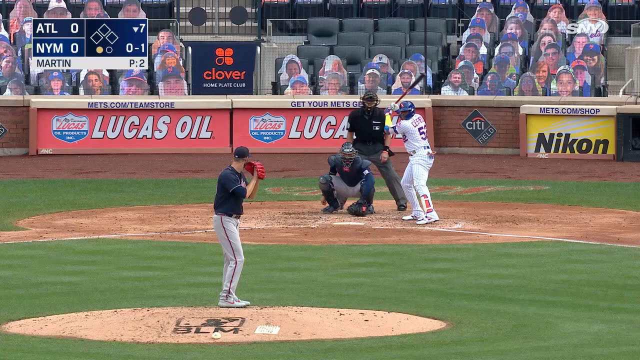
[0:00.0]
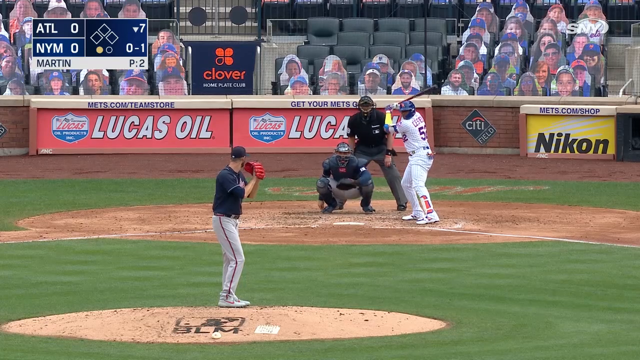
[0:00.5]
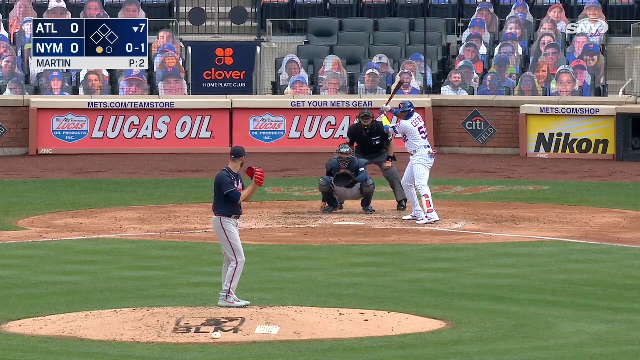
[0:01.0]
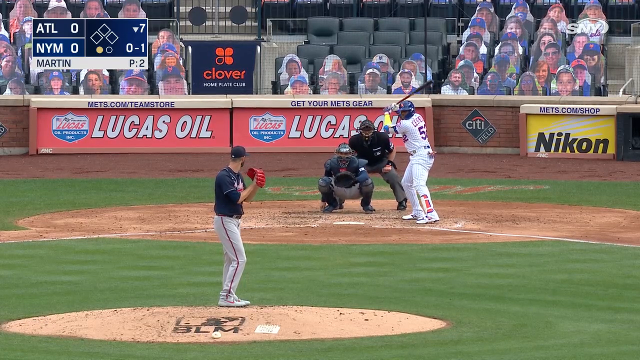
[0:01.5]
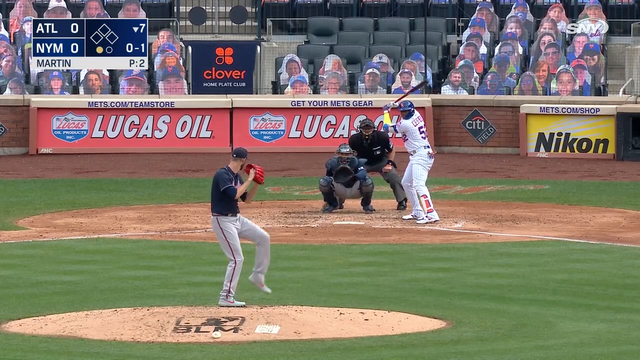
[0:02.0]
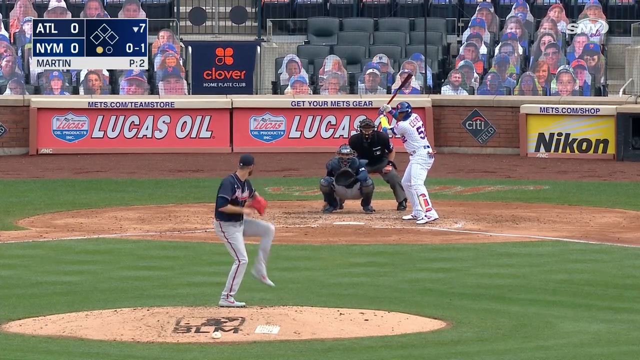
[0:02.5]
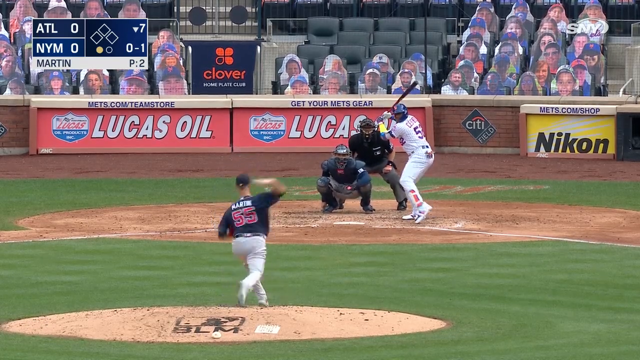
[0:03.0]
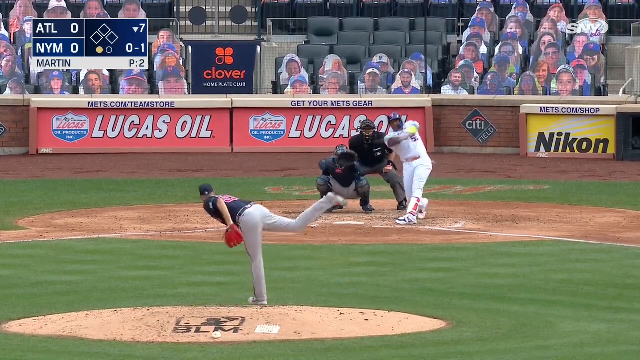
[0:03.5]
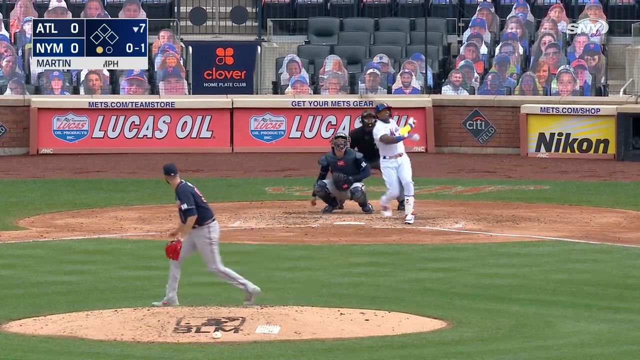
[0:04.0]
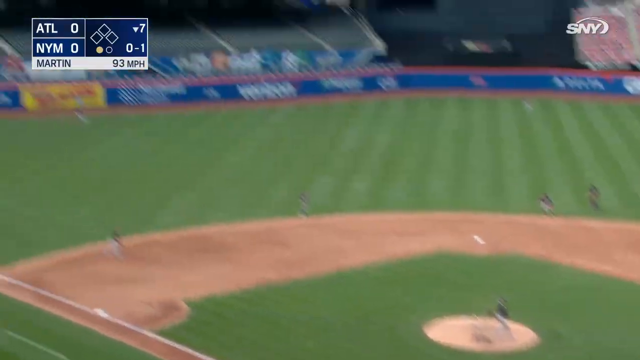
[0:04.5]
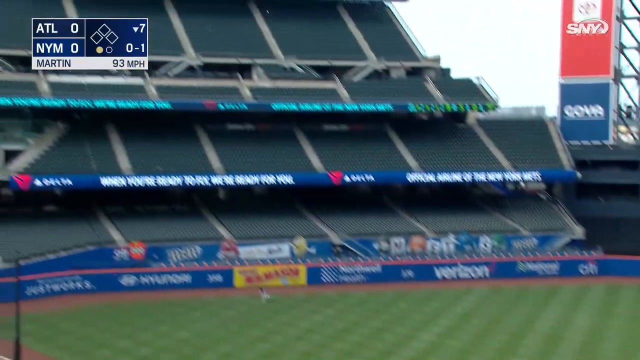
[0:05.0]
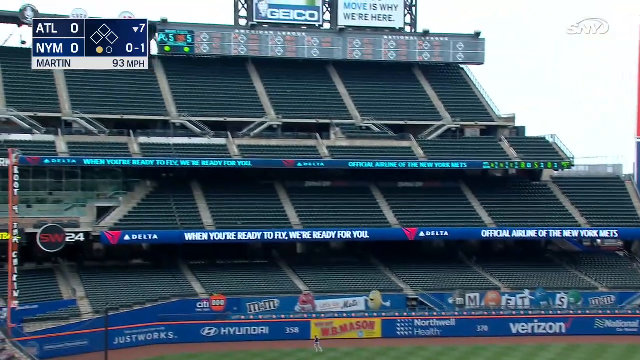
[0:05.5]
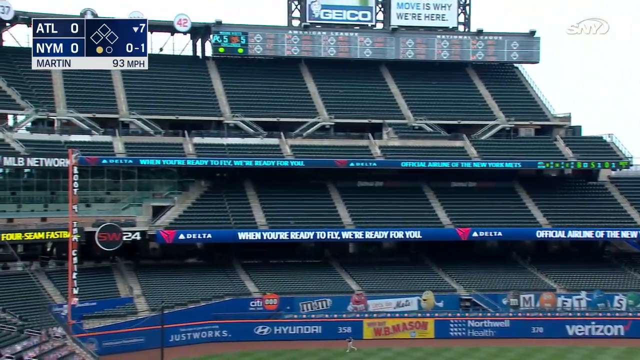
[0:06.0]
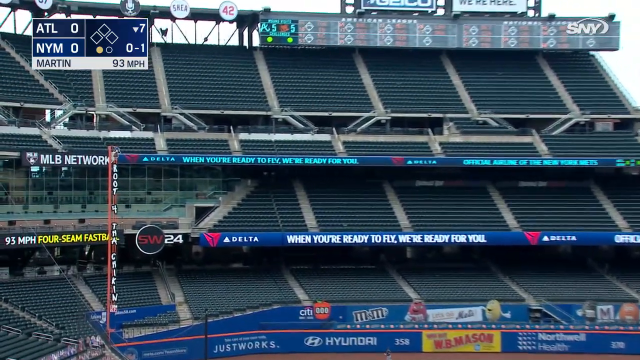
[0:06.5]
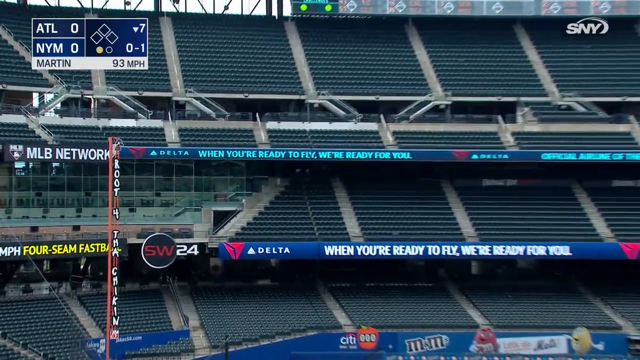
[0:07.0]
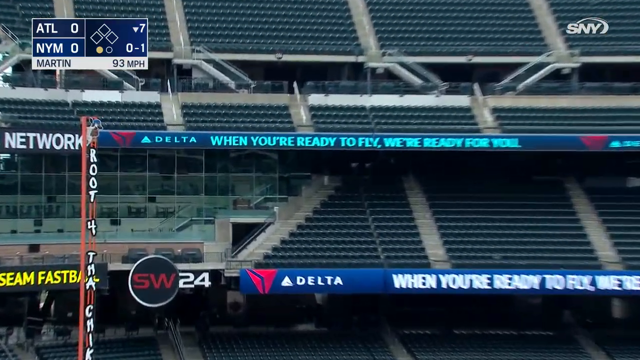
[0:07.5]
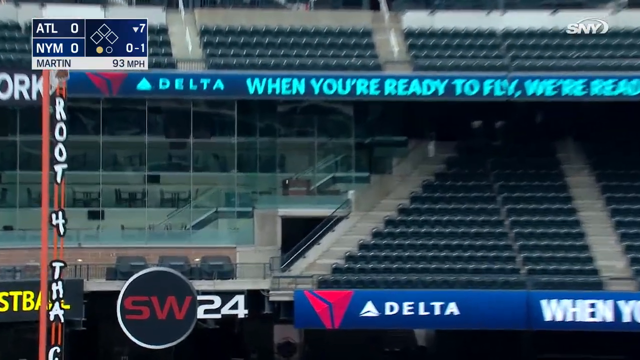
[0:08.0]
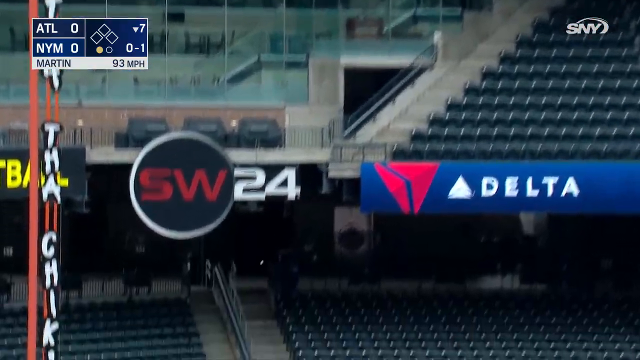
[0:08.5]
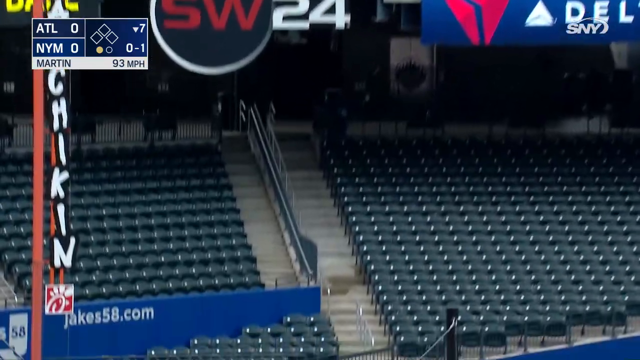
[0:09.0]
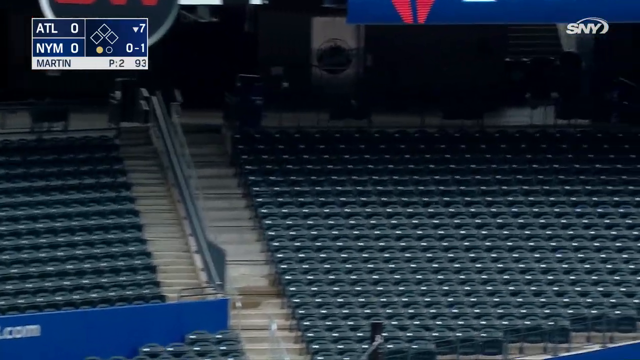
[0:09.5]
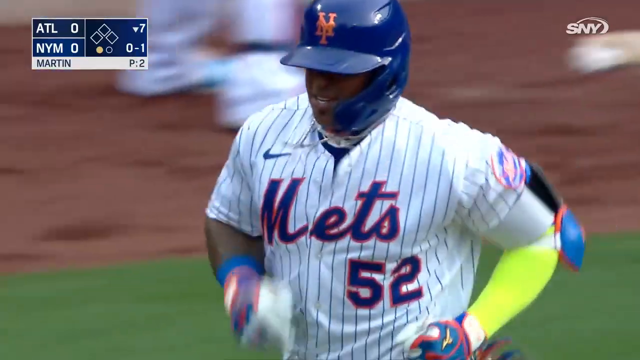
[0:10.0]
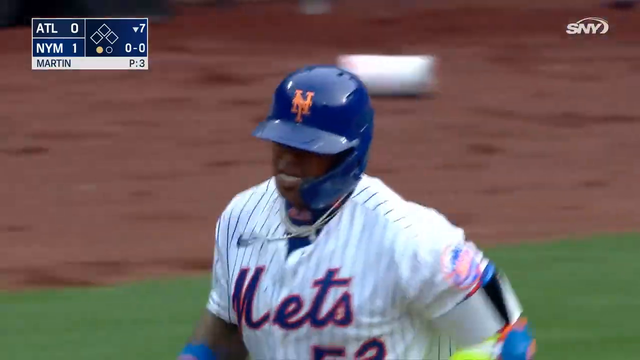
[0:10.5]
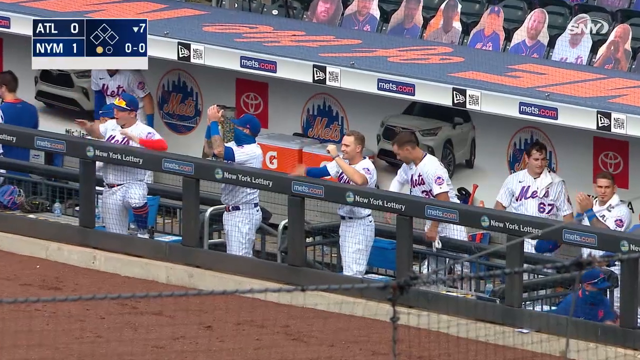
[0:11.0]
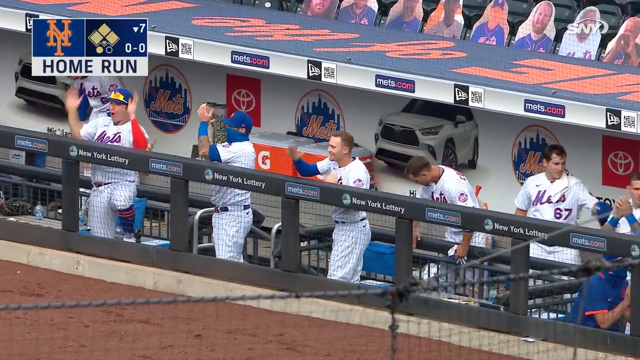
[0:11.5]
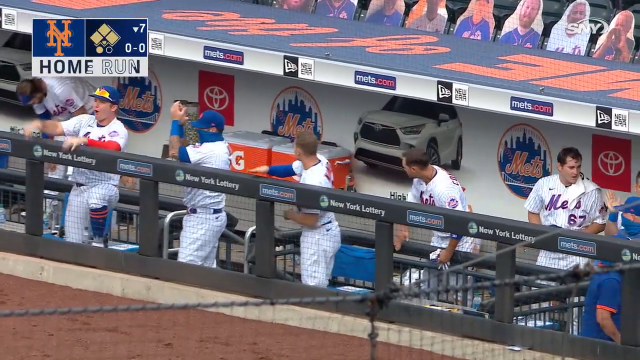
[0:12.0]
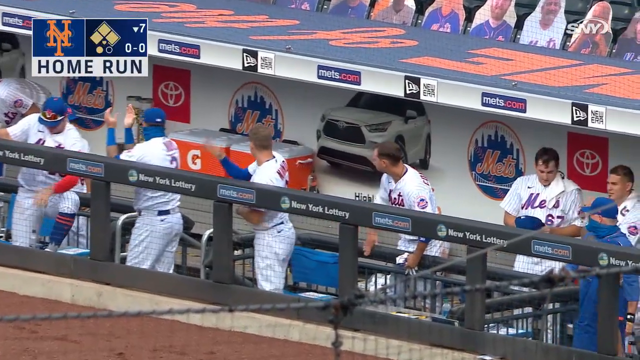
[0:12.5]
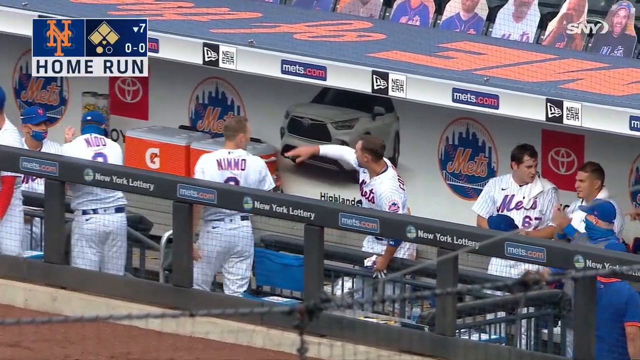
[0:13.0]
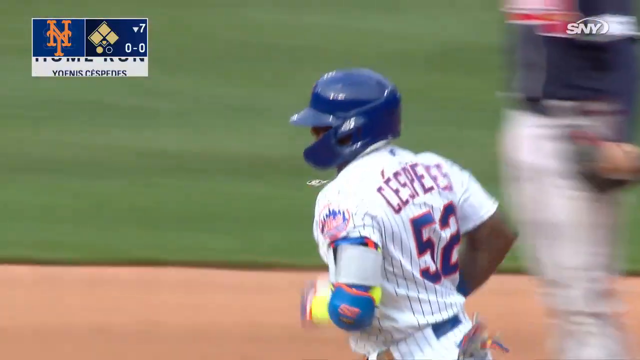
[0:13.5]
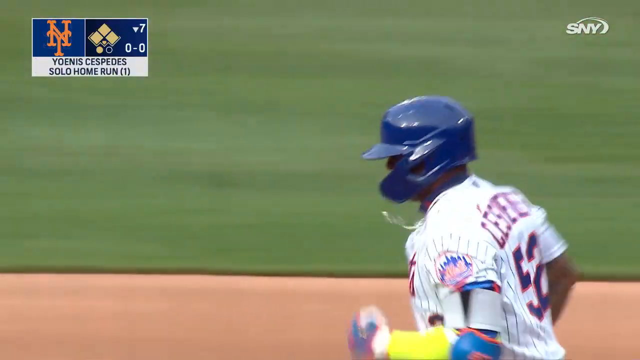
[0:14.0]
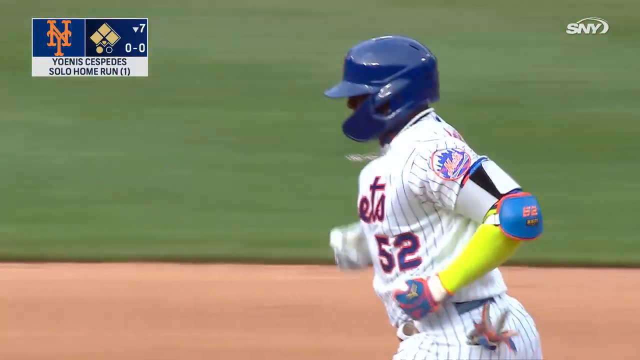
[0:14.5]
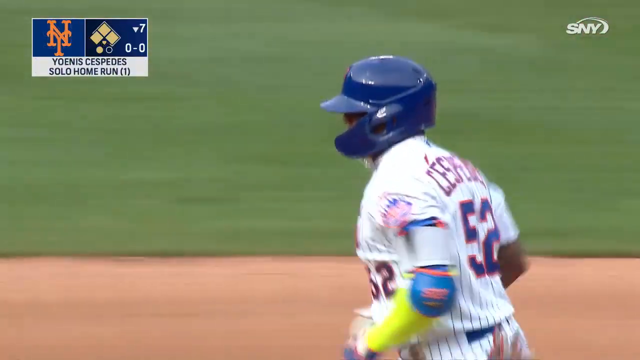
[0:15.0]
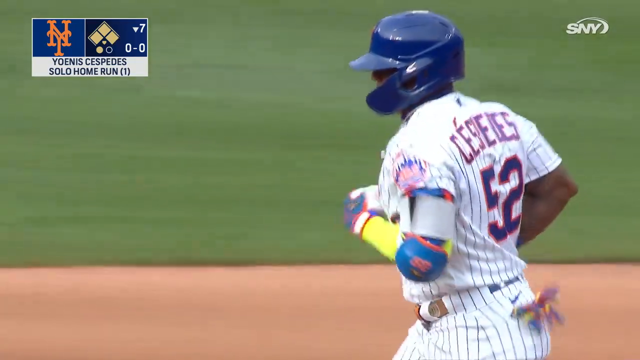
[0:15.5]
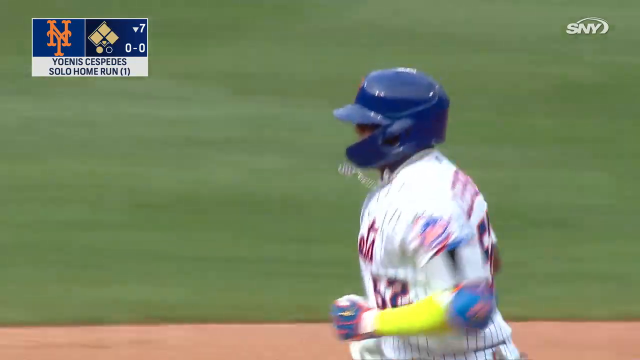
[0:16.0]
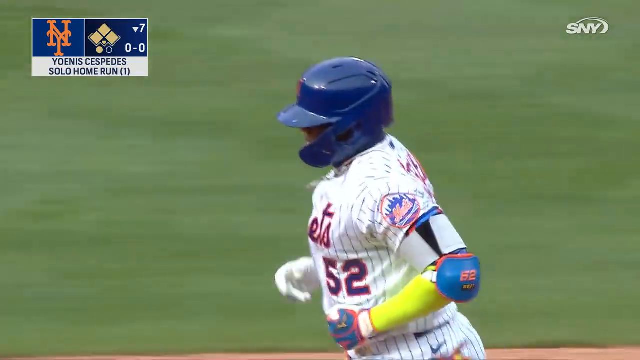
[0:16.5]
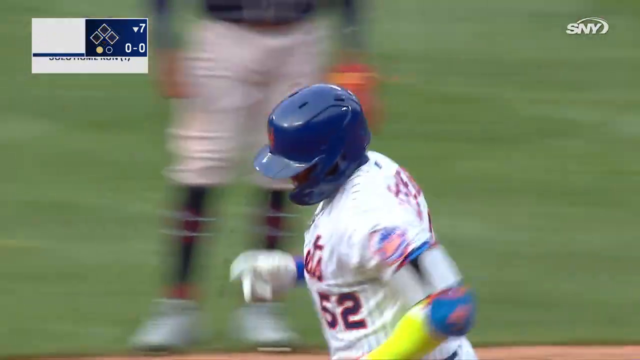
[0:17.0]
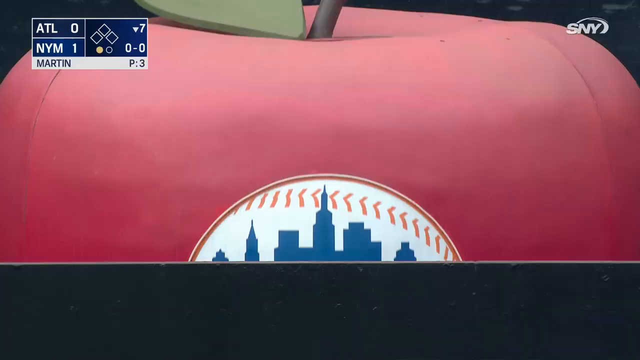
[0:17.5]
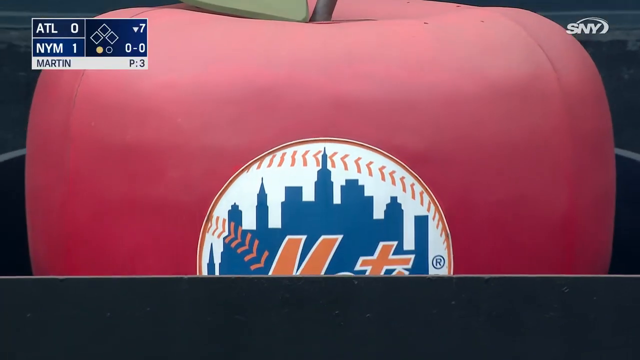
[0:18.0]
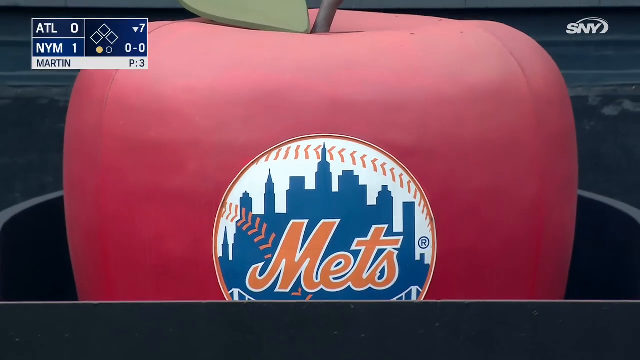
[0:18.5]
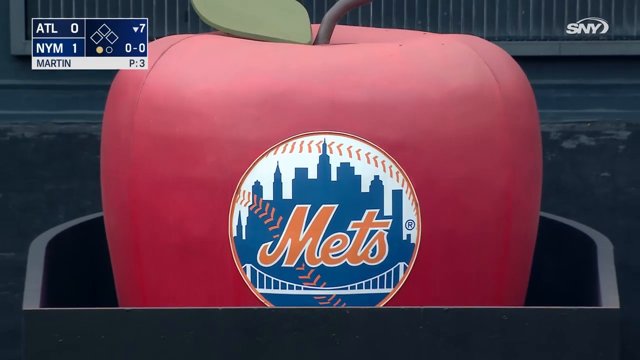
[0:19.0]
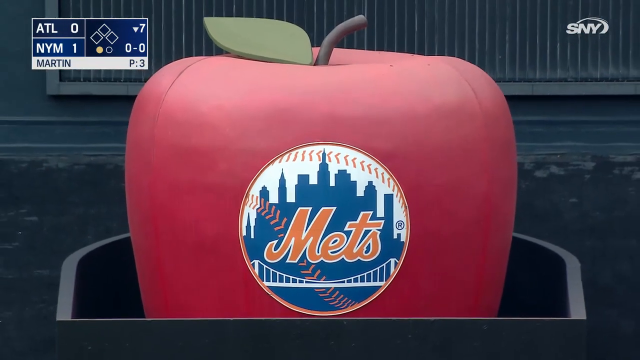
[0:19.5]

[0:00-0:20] A Major League Baseball game between the Atlanta Braves and the New York Mets is underway, with the Mets at home. A right-handed Braves pitcher is on the mound, wearing a dark uniform top and light gray pants with a red stripe down the middle, pitching to a right-handed Mets batter who looks like Cespedes. The batter is in the box waiting for the pitch, with a shin guard on his left leg. In the background is a brick wall at Citi Field, with advertisements for Nikon and Lucas Oil. In the rows of stands visible behind home plate, many seats are empty and others are filled with cutouts of people; apparently about 50 seats hold cutouts of people's faces, meaning the game took place during the COVID season. The right-hander, Martin, number 55, throws a fastball, and Cespedes hits it hard over the wall in left field for a home run. It is the bottom of the seventh with one out. As Cespedes starts to round the bases, the camera goes to the Mets dugout, where various players are cheering. The camera returns to a close-up of Cespedes rounding the bases, and a graphic reads "Yoenis Cespedes solo home run, number one." Then the large apple with the Mets logo comes up to celebrate the home run.